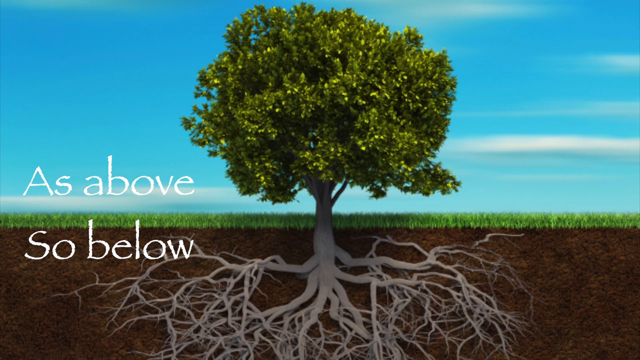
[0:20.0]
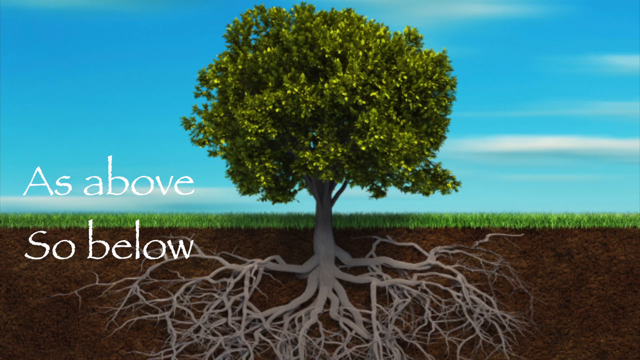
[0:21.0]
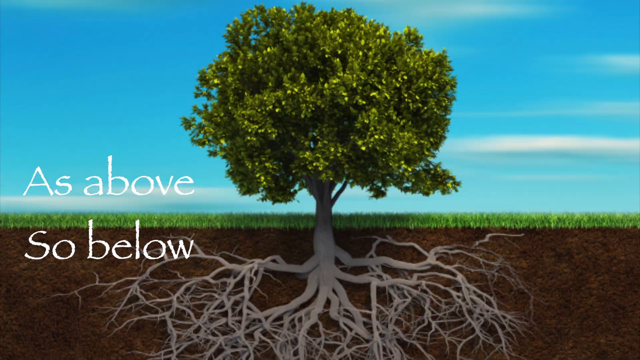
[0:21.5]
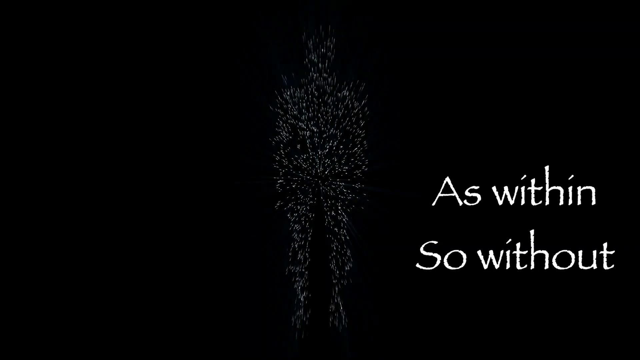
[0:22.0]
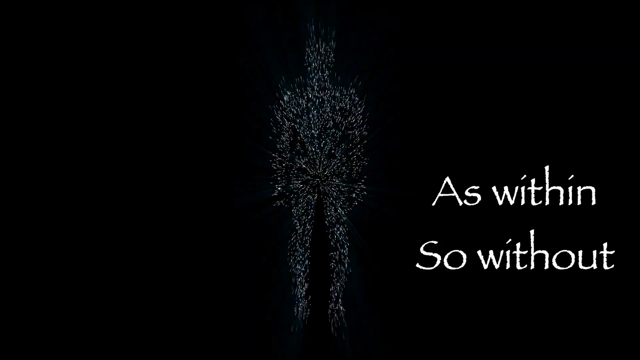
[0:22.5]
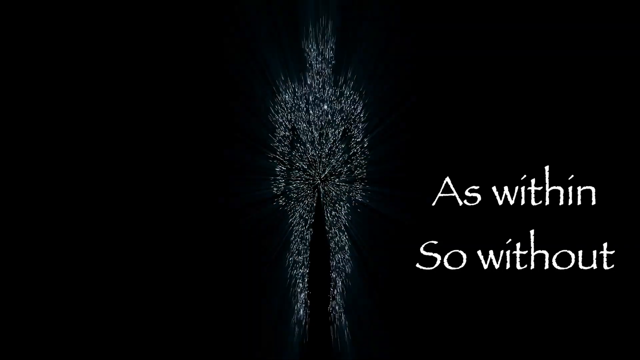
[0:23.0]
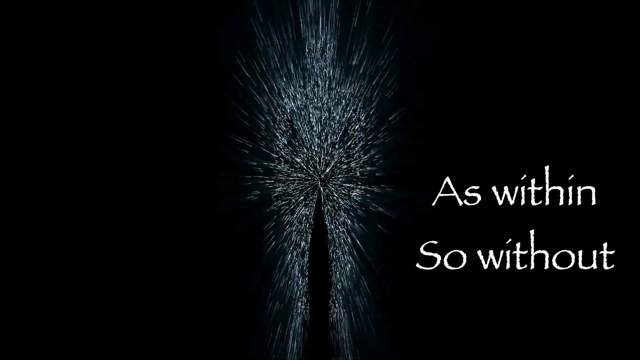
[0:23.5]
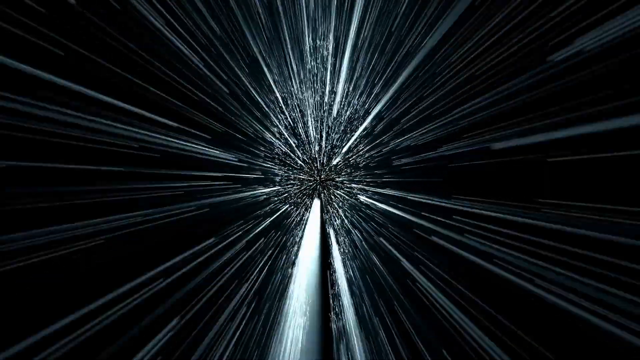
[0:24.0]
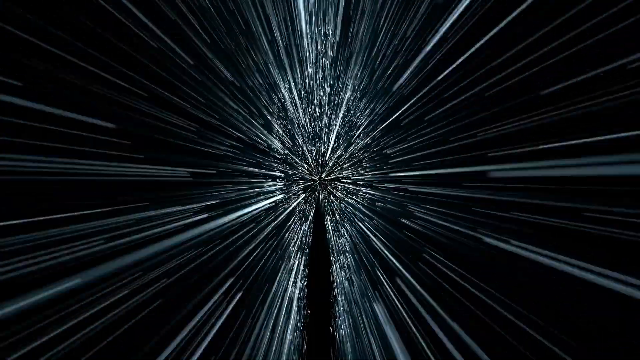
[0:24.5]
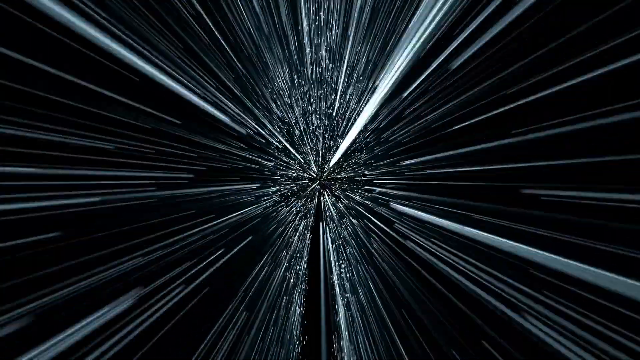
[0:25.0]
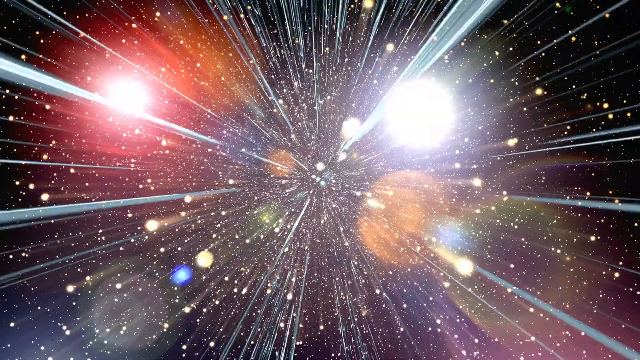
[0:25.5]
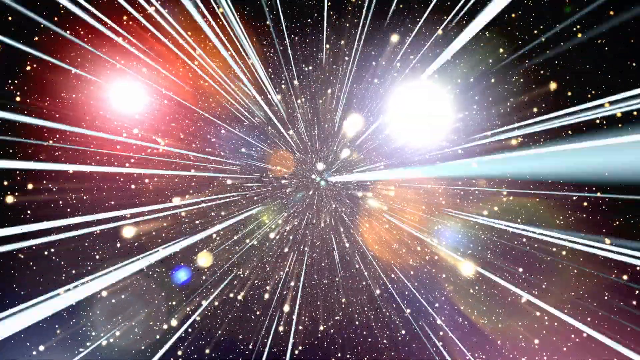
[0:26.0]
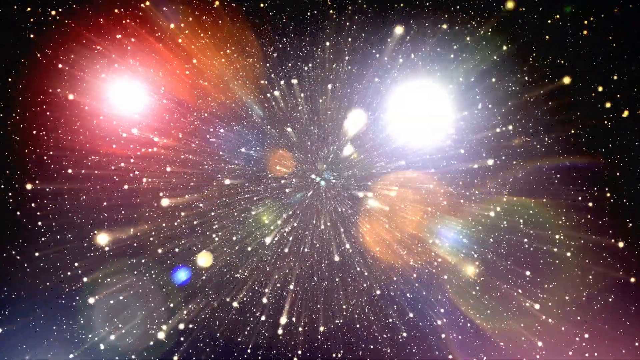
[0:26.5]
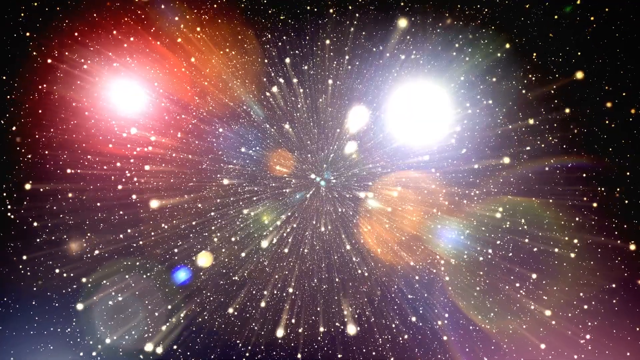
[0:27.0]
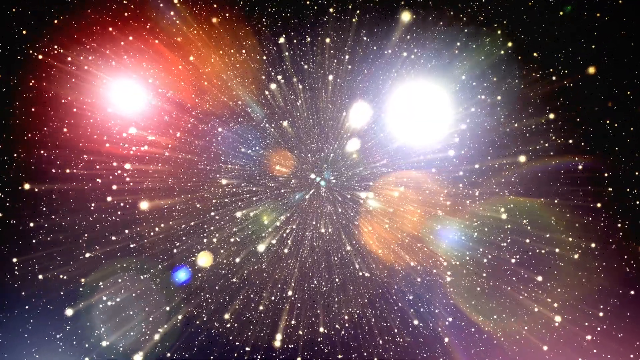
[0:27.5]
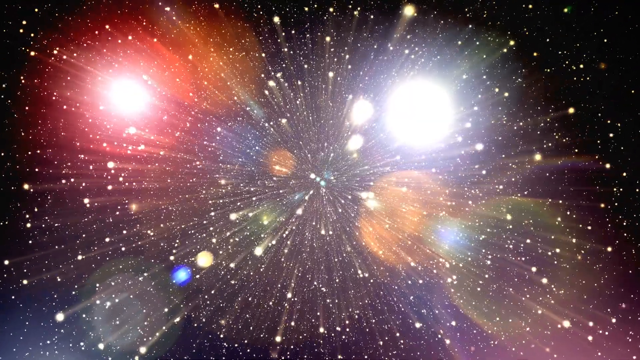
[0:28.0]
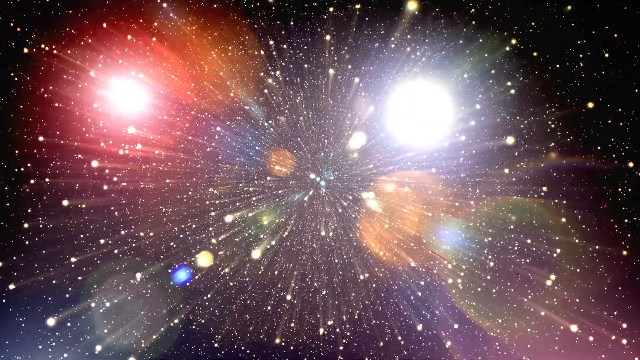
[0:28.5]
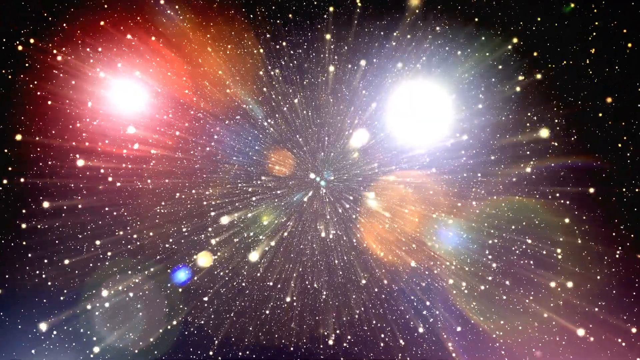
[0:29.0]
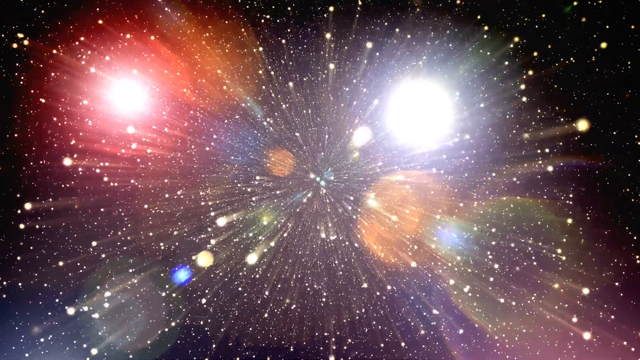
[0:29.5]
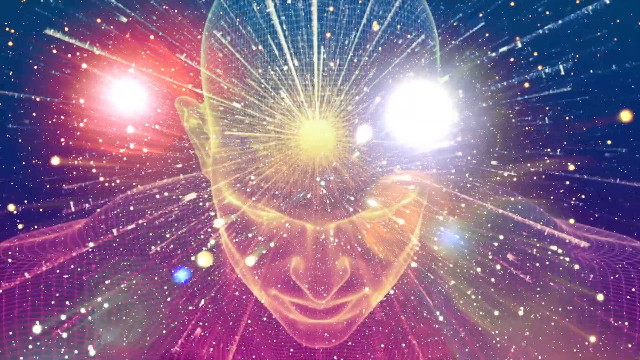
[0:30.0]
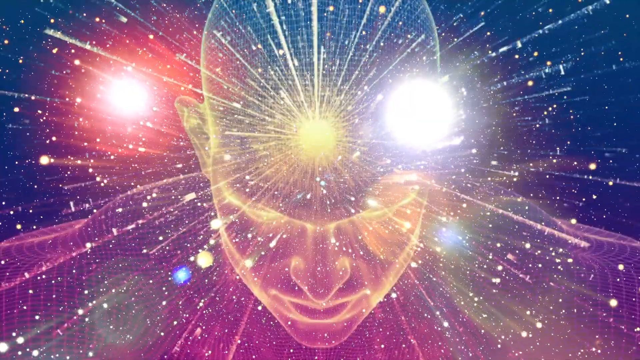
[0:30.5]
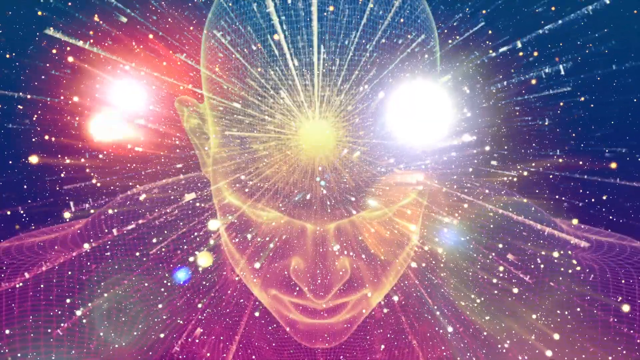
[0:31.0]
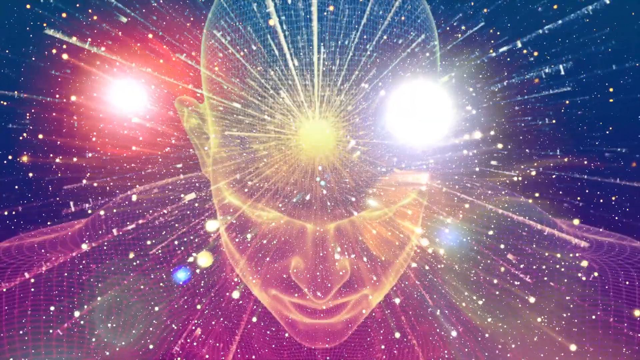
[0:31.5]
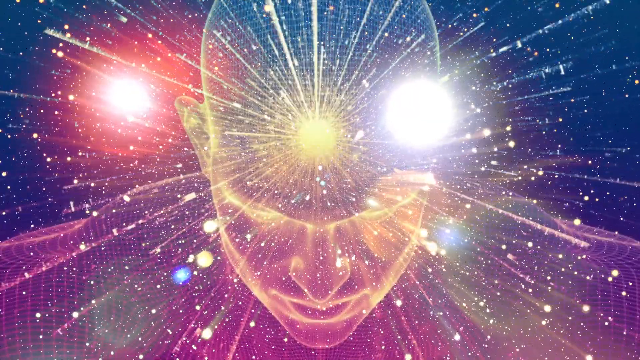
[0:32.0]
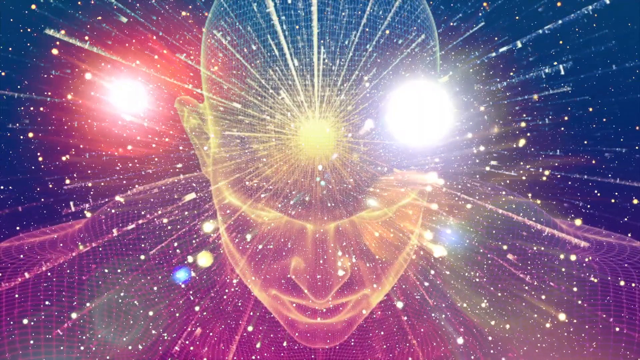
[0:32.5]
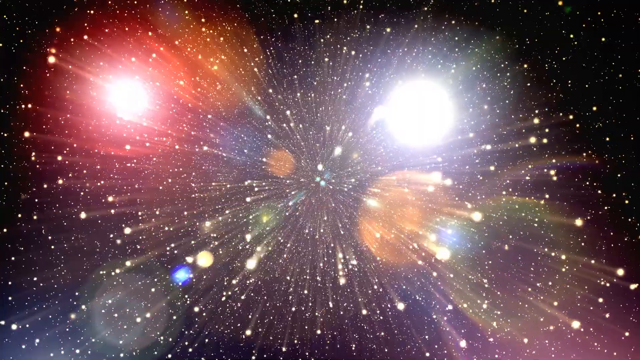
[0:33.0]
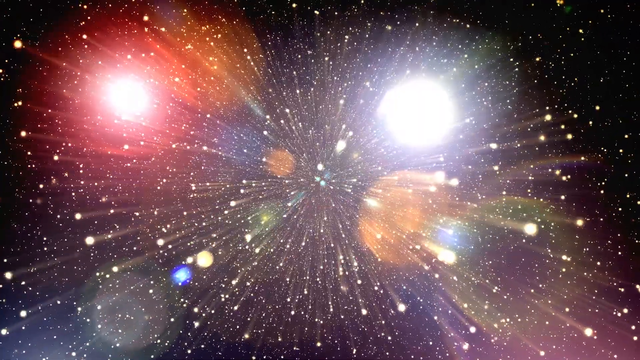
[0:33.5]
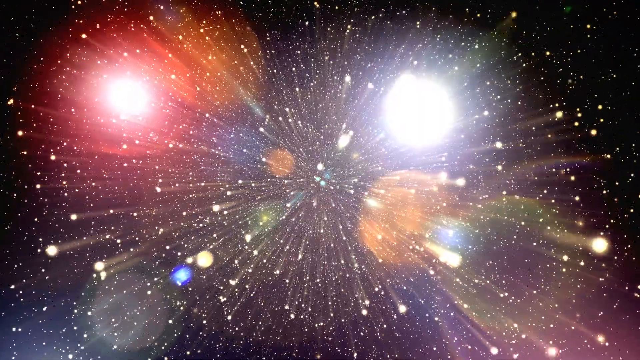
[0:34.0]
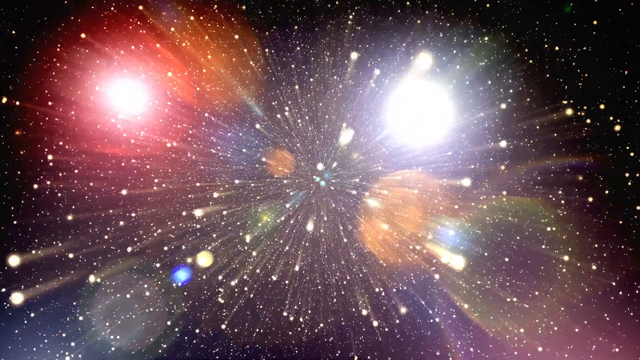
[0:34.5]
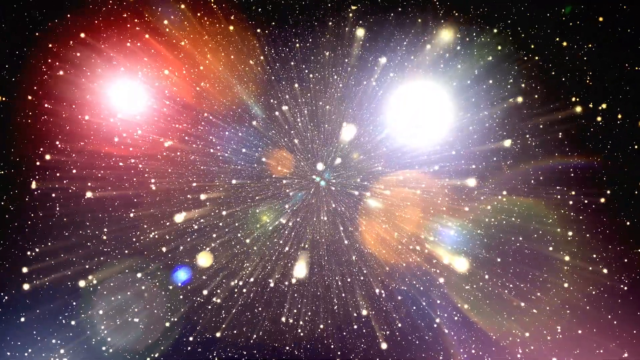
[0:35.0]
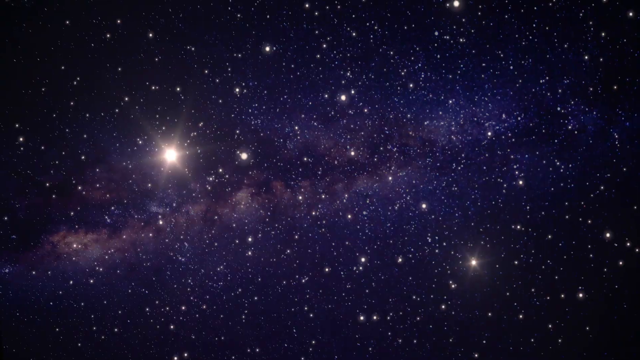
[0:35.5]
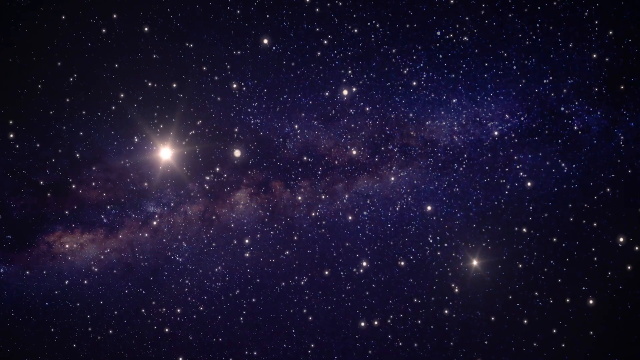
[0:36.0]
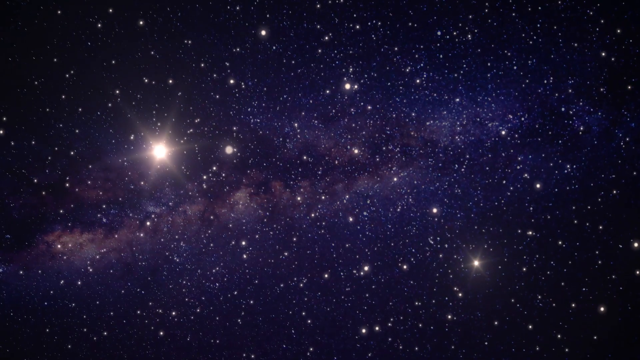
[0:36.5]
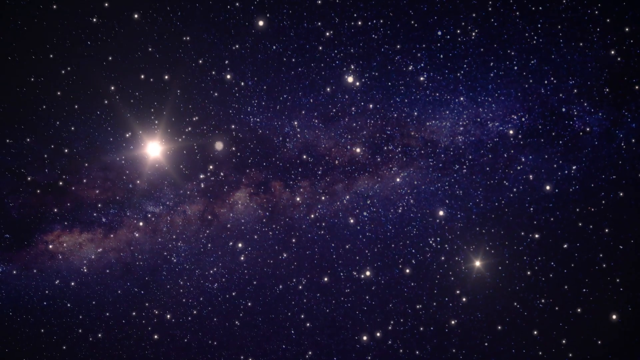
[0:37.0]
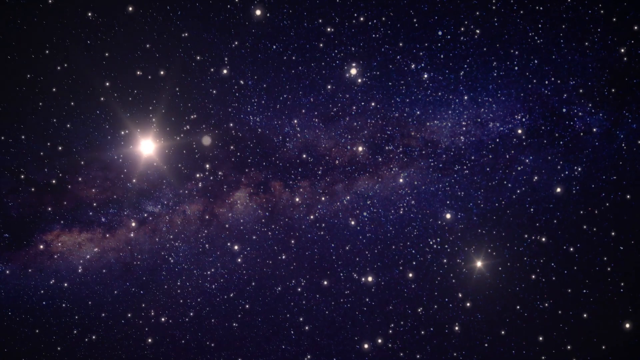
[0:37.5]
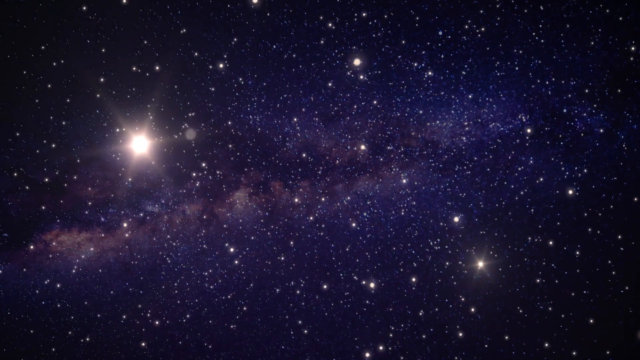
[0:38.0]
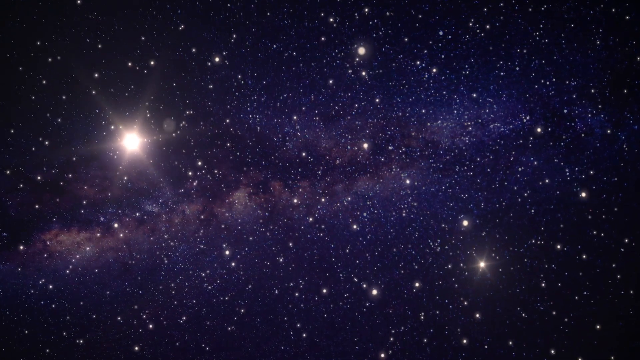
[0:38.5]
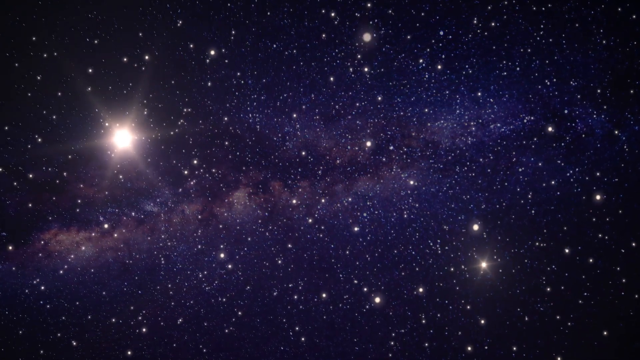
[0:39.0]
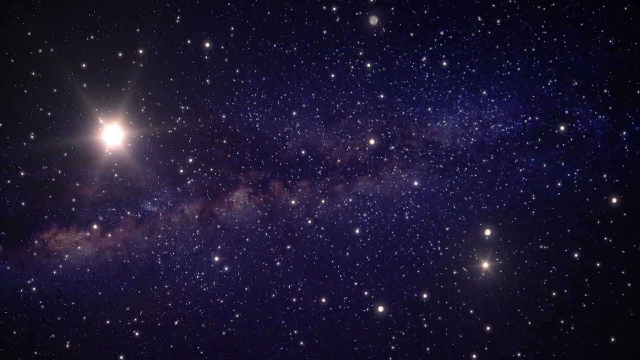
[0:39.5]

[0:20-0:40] The scenery changes to a green, fresh tree whose roots in the ground are clearly visible, along with the soil. The grass is bright green, and the sky is bright blue with many clouds. Text on the left side of the screen says "As above. So below." The screen turns black, and white text on the right side says "As within, so without." A sparkly silver human figure appears in the middle of the screen, and sparks start flying everywhere. Visuals of galaxies follow, like shooting stars, bright lights and bright colours: green, orange, blue and yellow. A 3D human figure from the shoulders up pops onto the screen with its head facing down. It disappears, and something like a starry night appears.